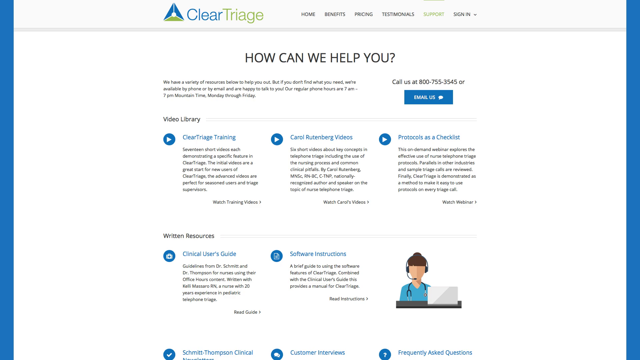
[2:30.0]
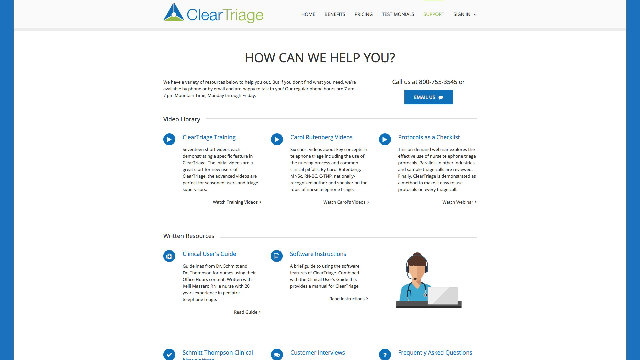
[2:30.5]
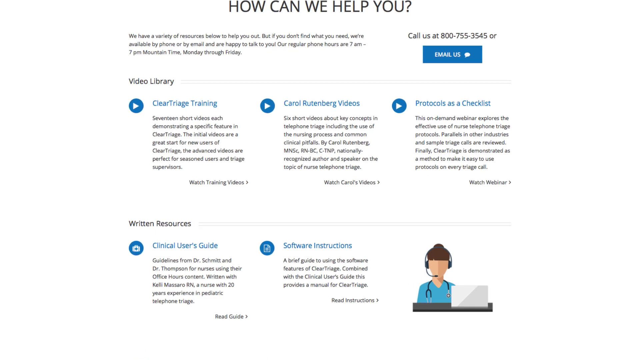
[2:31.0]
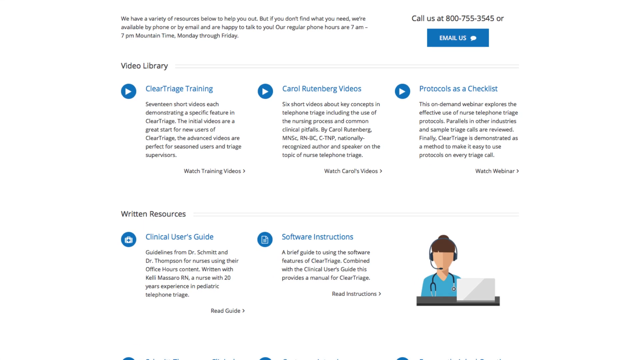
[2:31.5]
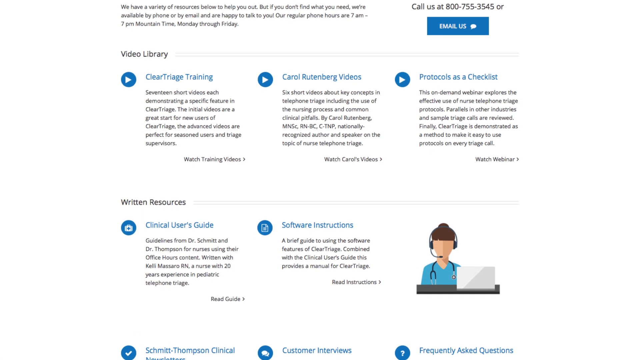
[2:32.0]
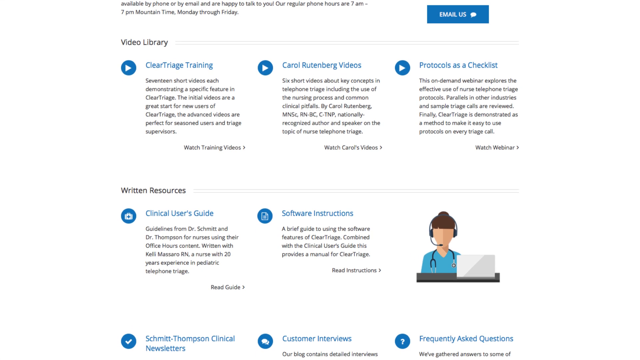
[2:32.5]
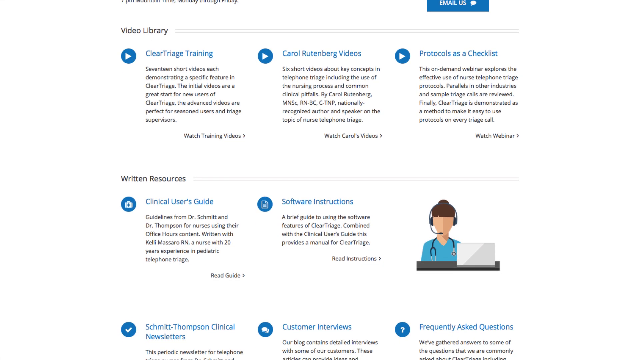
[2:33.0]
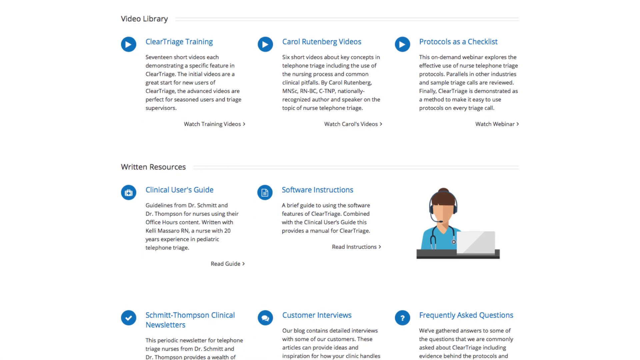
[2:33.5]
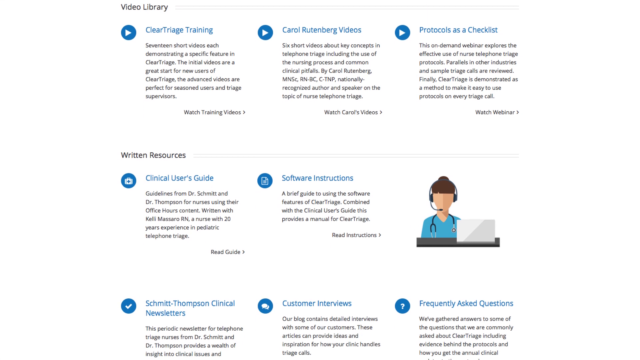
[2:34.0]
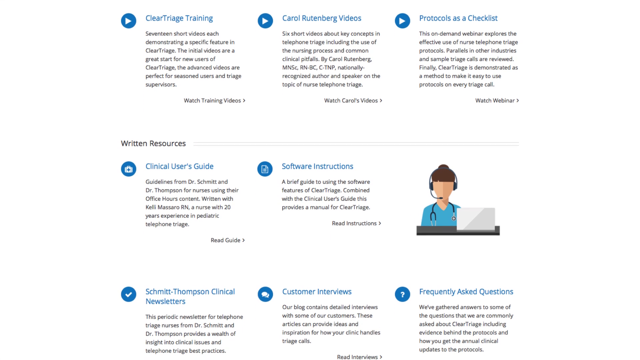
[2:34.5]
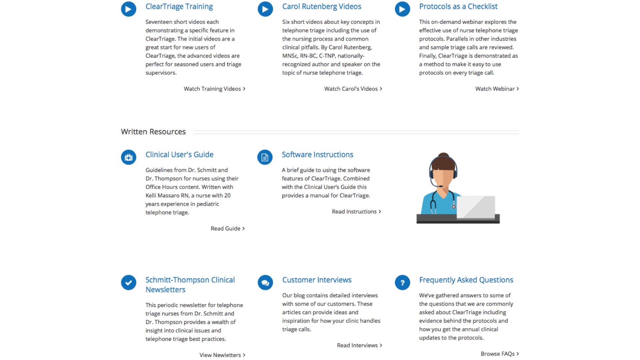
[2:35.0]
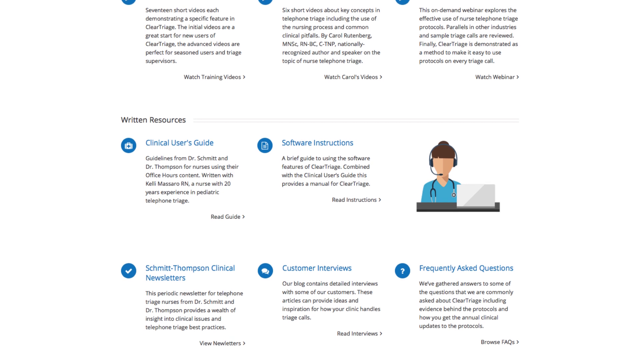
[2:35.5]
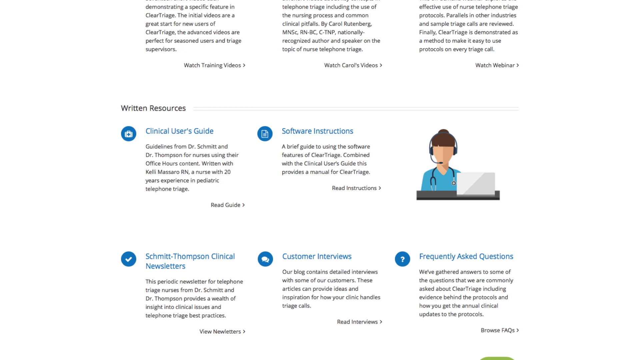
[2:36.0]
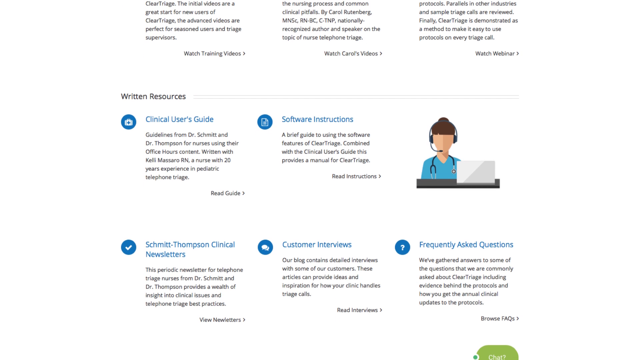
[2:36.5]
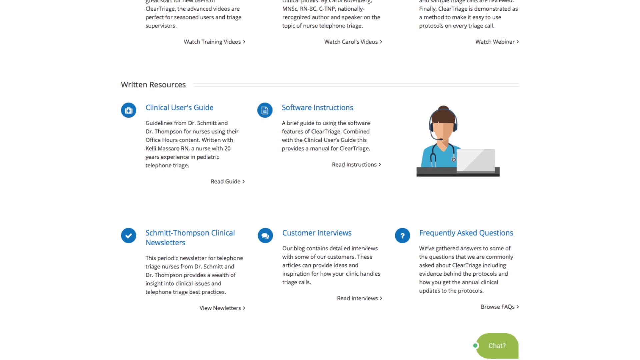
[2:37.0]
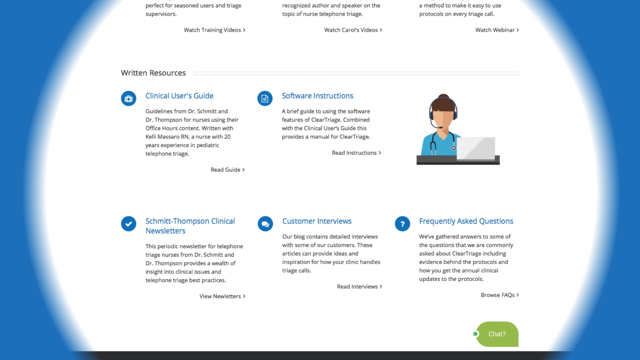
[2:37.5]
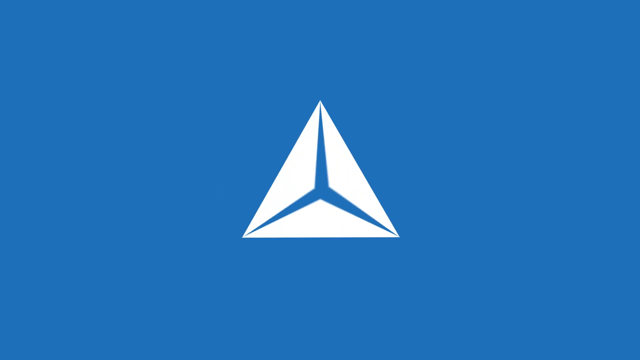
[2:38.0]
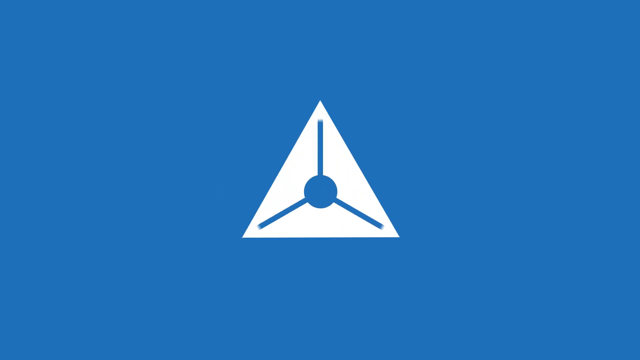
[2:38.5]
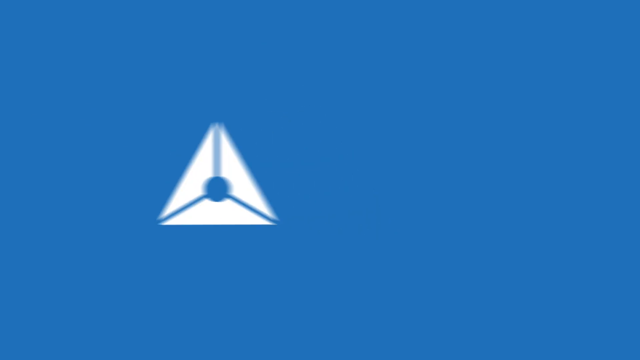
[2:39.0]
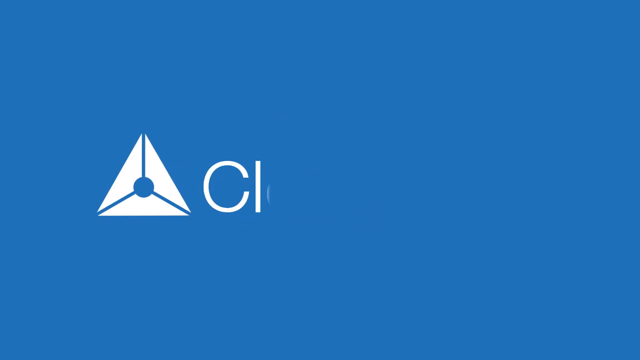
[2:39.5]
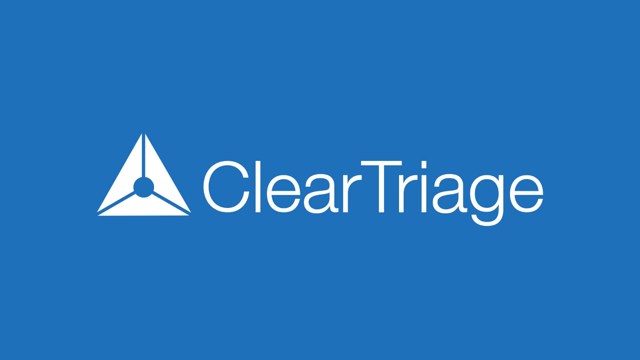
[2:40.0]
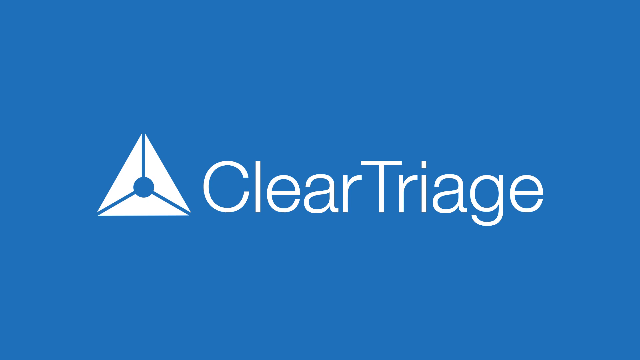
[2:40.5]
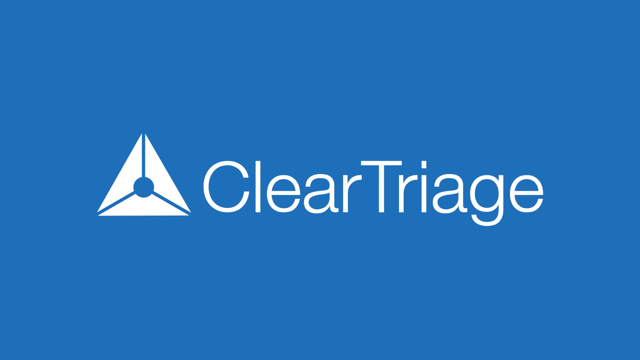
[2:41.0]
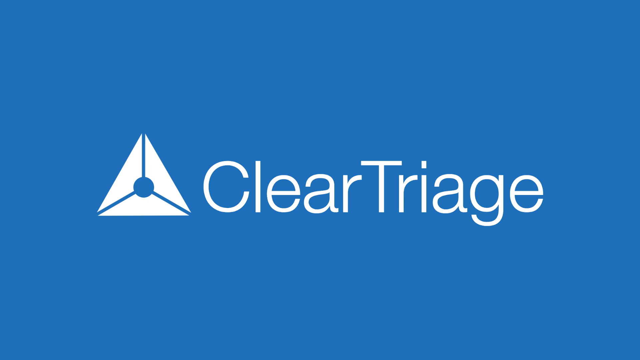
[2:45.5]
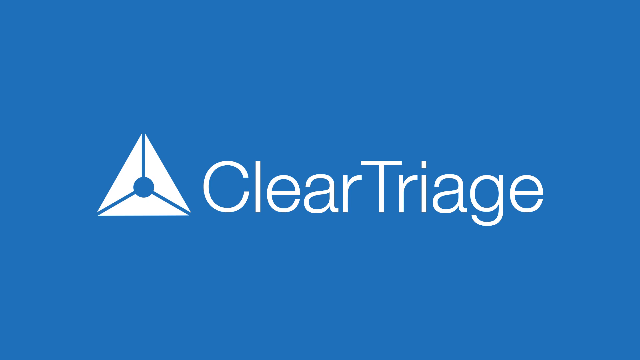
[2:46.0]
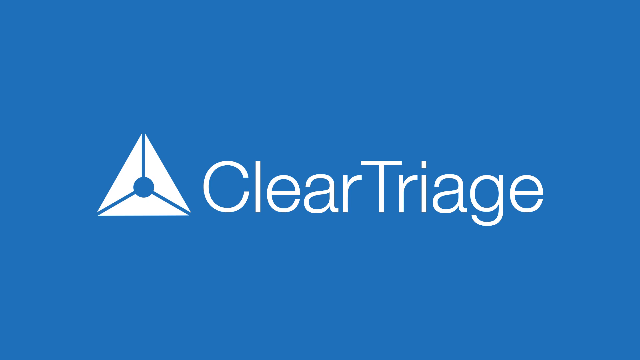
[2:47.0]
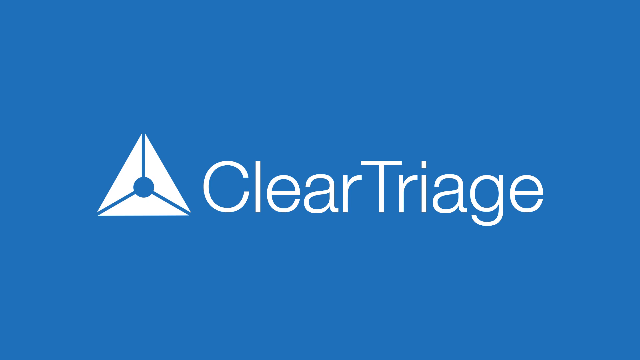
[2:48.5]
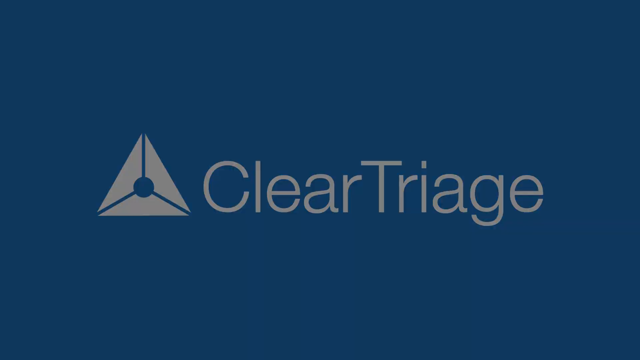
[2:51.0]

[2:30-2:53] A computer screen with a white background says "how can we help you" in black letters at the top, with several things below. The view zooms in and scrolls down the screen, which has things like software instructions. It then zooms out and turns into a completely blue screen. A white triangle appears with a blue circle in its center, one line going up toward the tip of the triangle and lines going to the other two sides. The triangle moves to the left, and the words "clear triage" appear to its right in white letters, with the C and the T capitalized and the rest lowercase. The screen then fades to black.